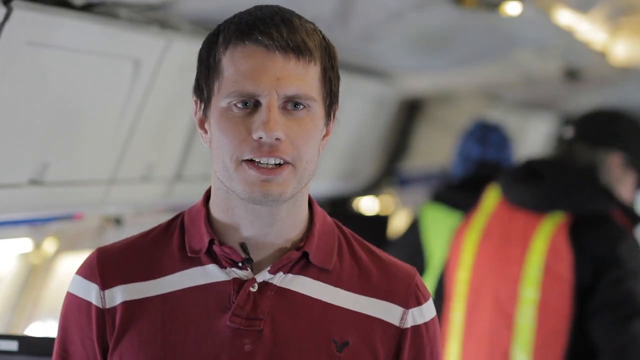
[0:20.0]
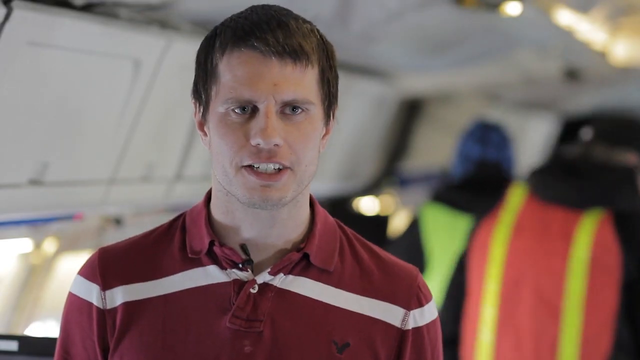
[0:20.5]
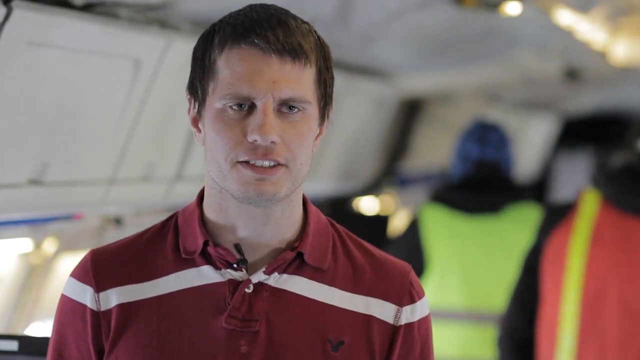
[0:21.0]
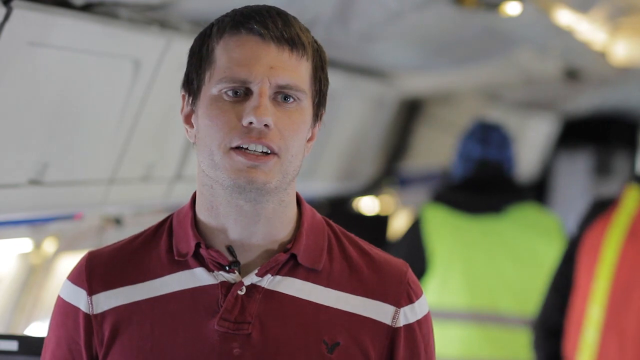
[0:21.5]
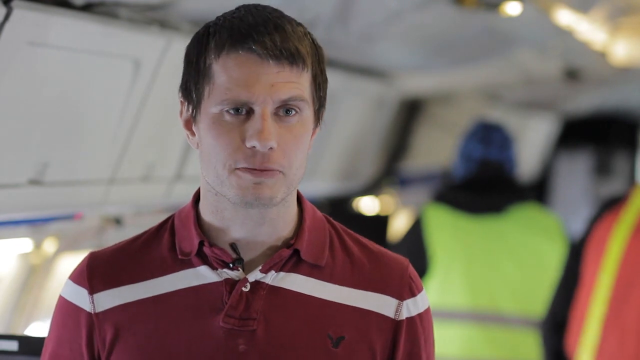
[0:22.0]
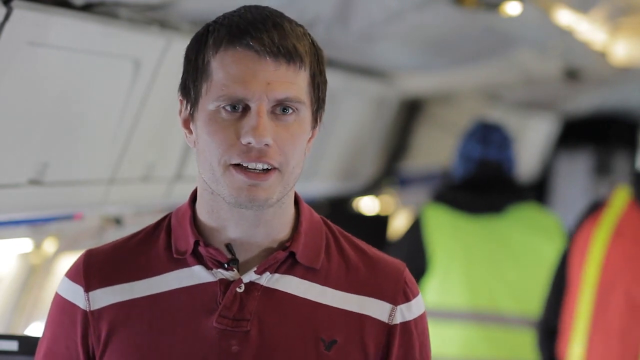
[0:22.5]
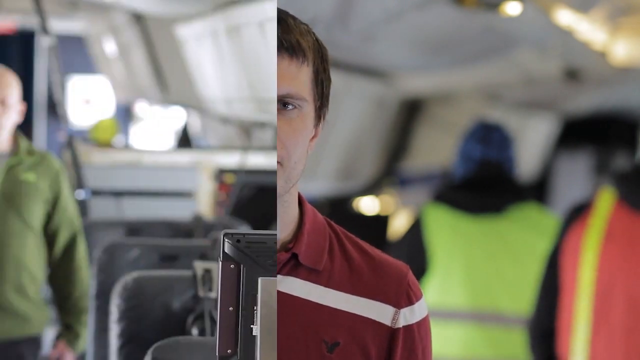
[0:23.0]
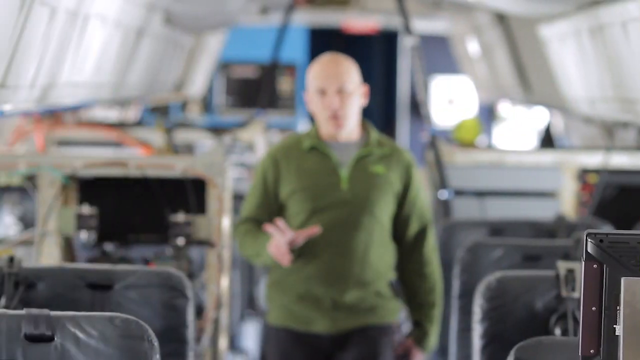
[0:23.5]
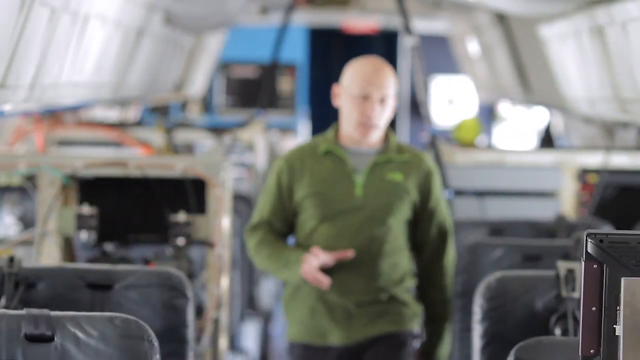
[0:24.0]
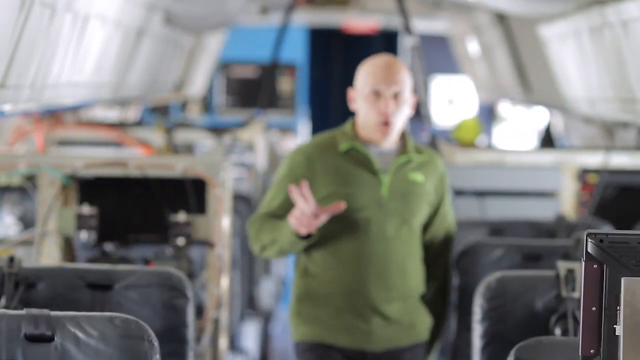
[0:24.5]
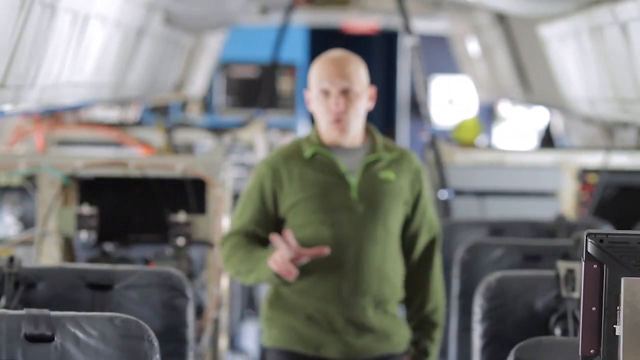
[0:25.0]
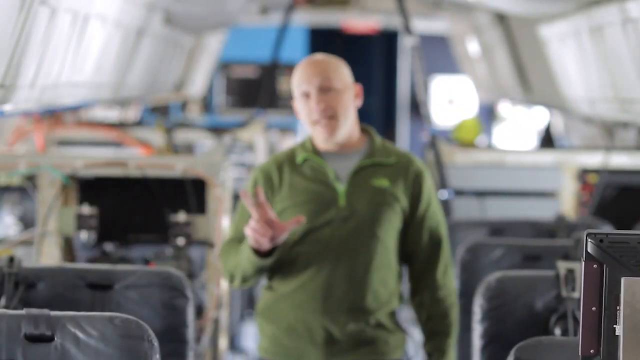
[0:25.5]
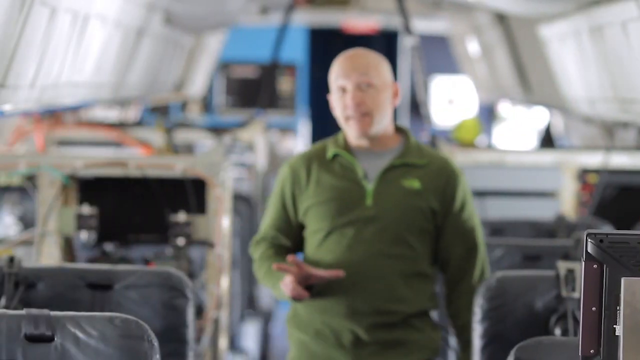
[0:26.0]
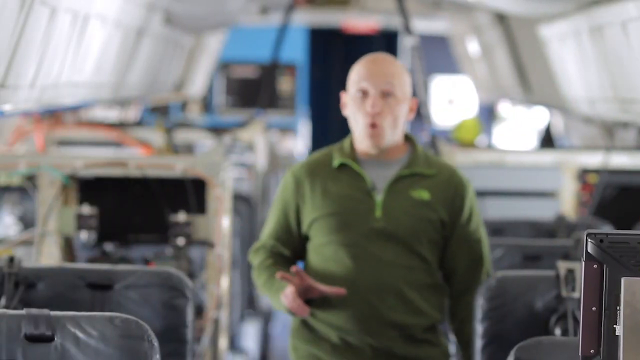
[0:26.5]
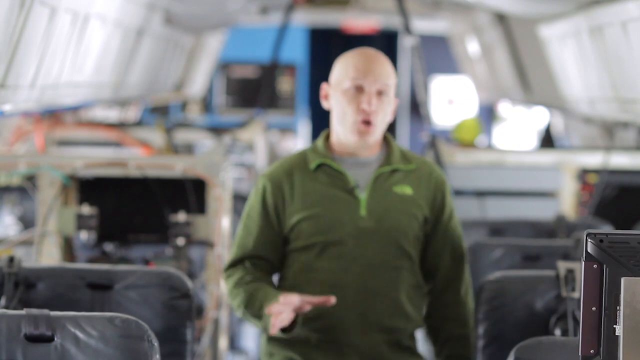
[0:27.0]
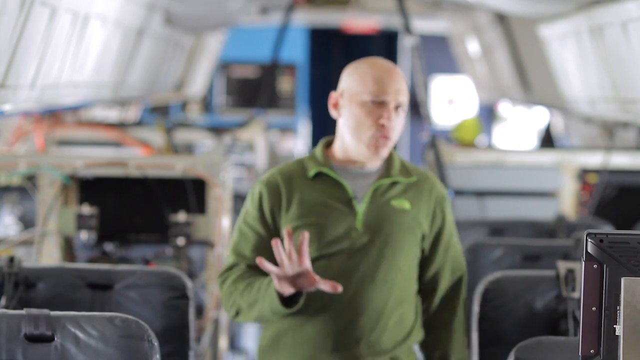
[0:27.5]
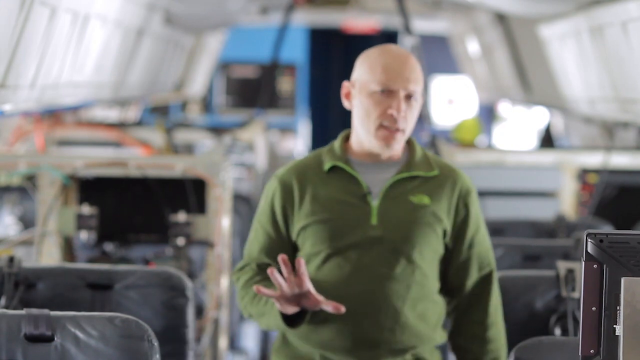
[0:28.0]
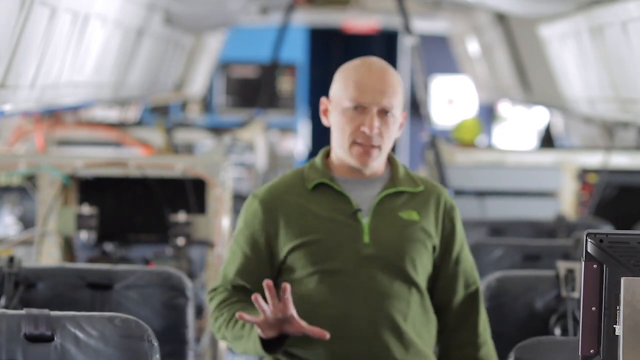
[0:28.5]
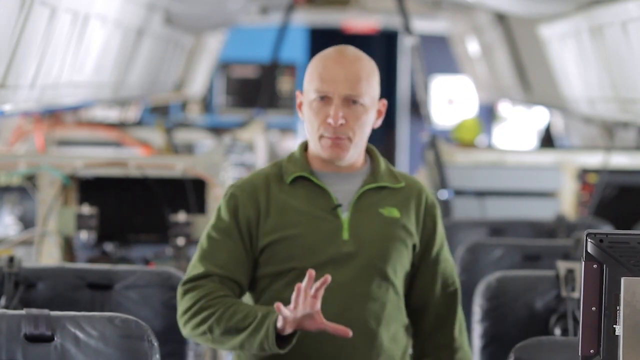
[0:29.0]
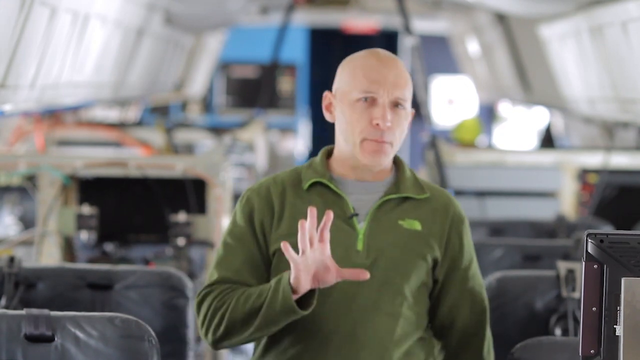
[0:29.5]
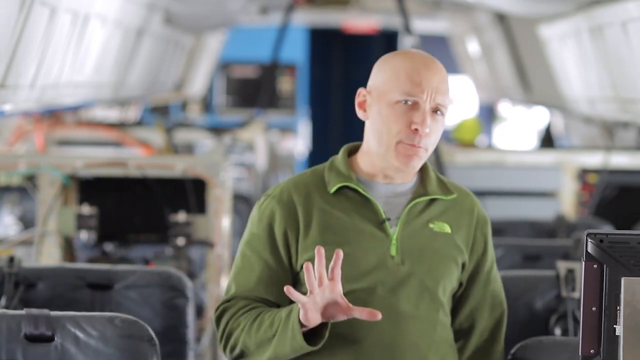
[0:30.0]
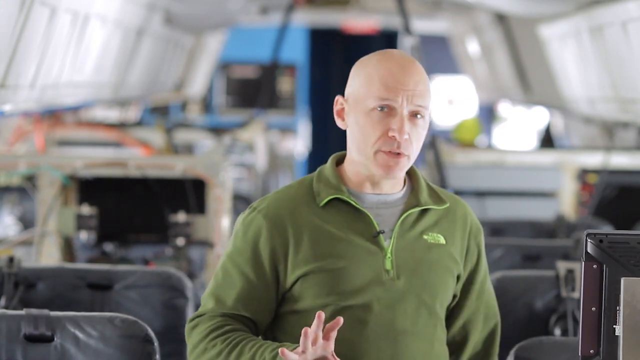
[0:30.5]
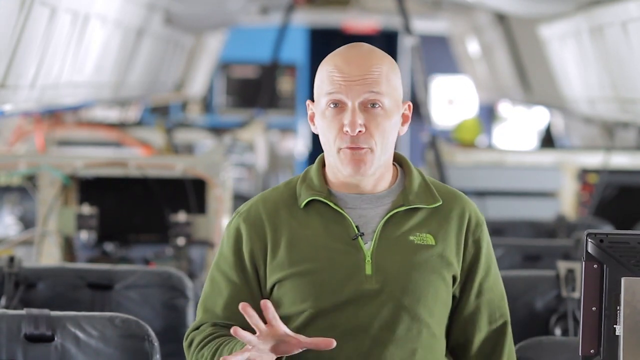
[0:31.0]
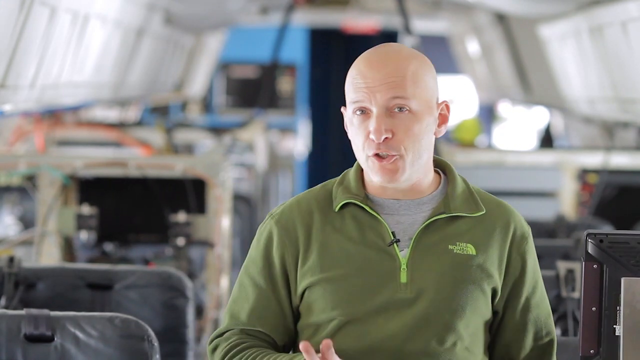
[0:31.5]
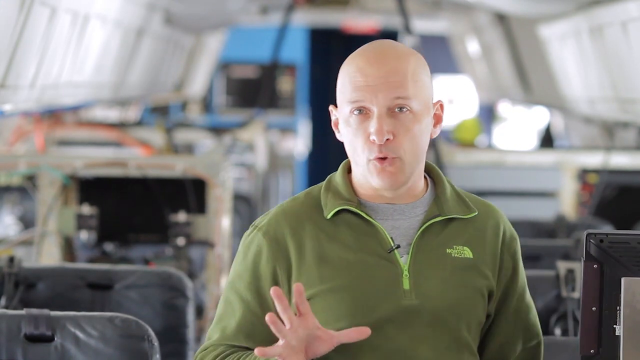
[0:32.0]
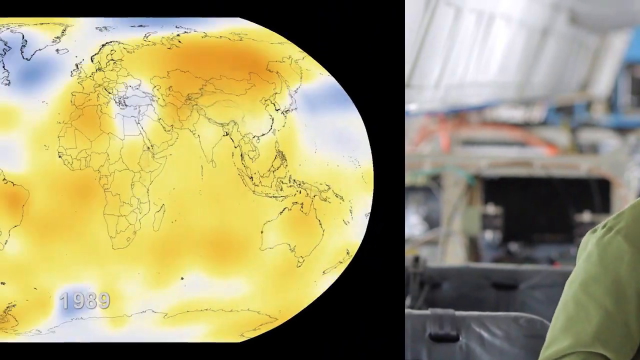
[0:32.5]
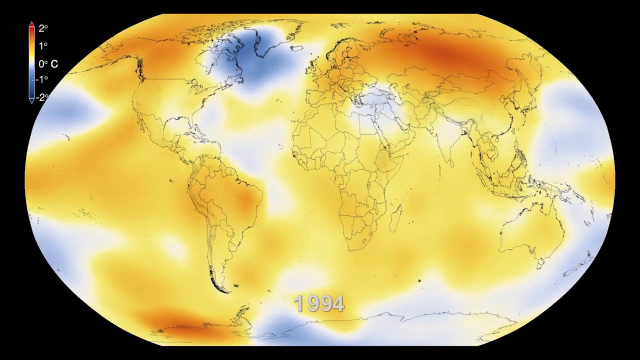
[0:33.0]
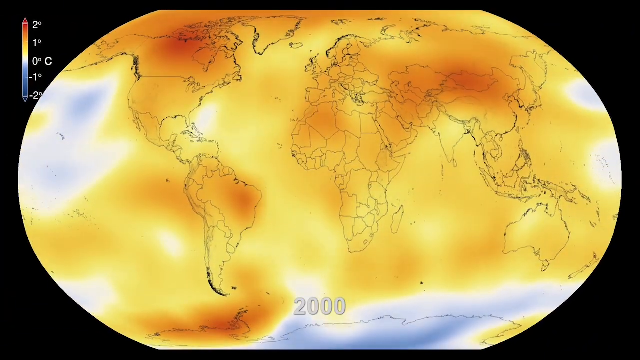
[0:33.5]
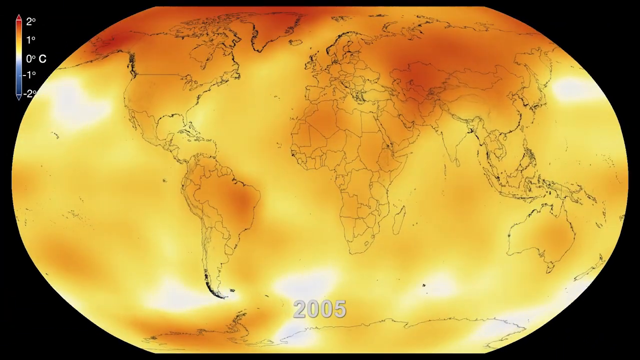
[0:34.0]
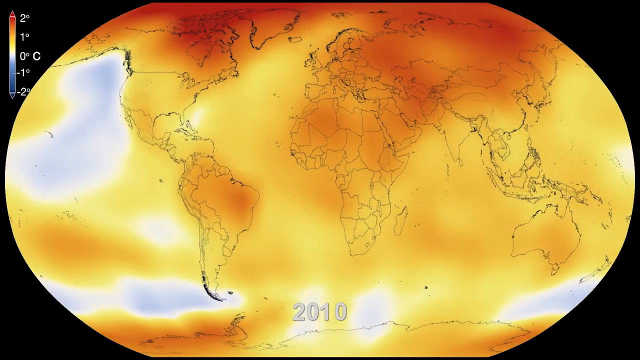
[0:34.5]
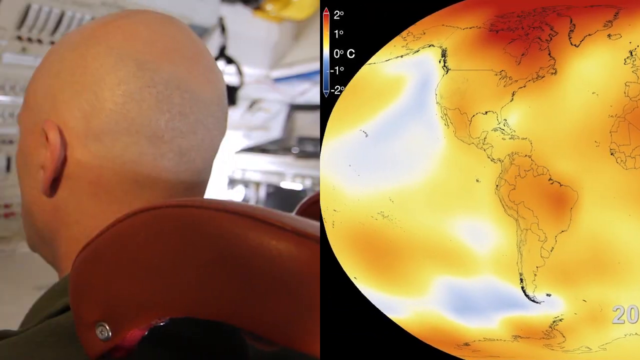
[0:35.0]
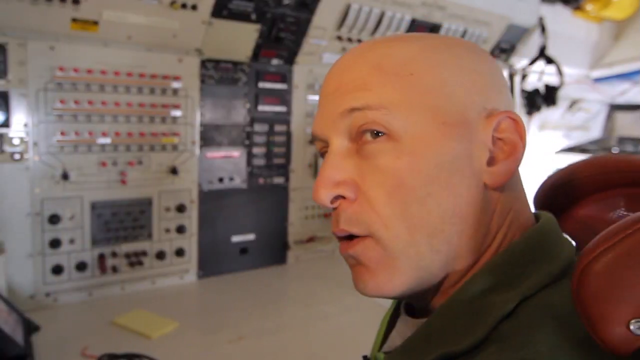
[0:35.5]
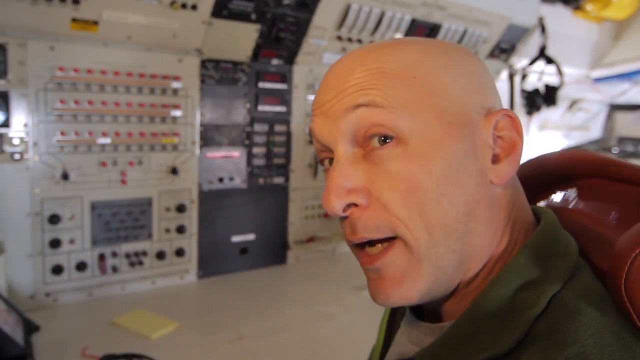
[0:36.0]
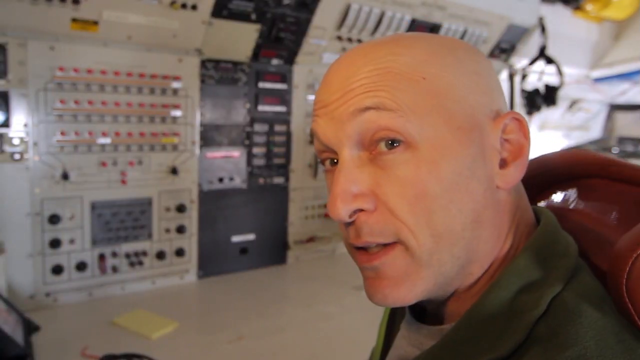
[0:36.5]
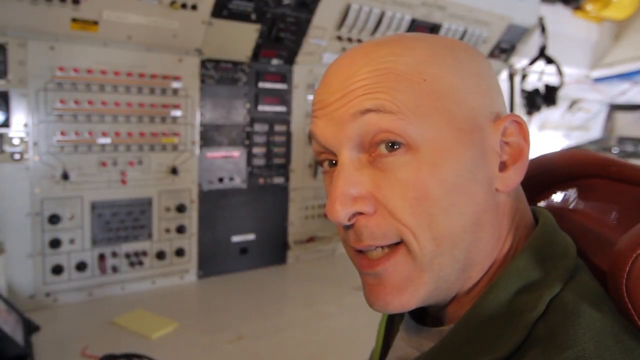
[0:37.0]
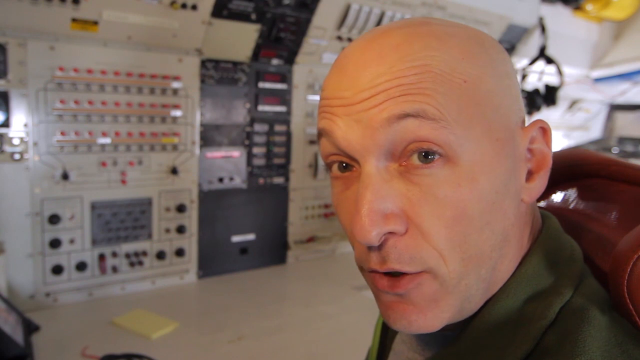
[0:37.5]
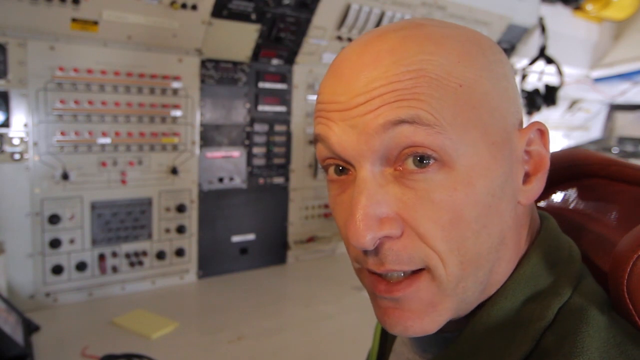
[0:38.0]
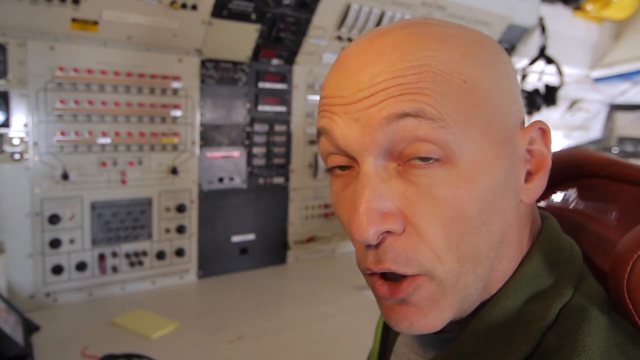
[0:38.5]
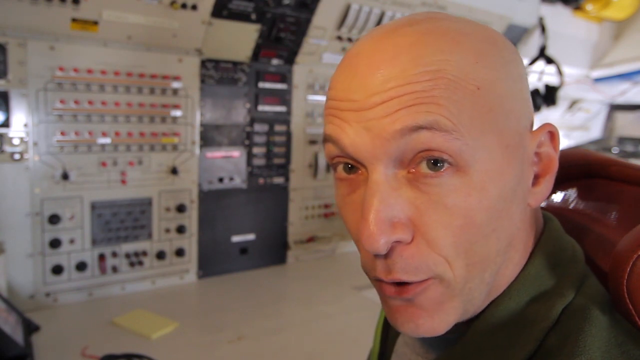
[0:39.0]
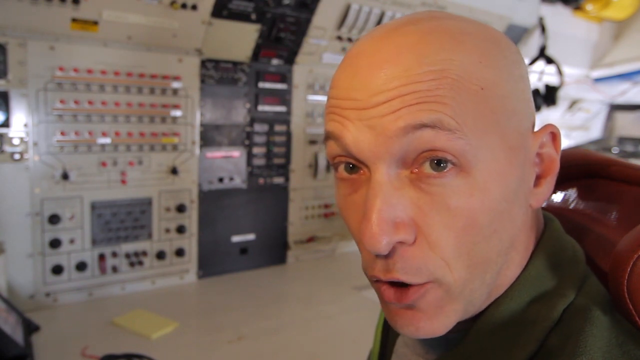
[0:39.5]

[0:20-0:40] A Caucasian man wears a red and white shirt, with other people behind him wearing vests like construction workers' vests. They all appear to be inside some type of aircraft, like a plane. Another man appears on screen, also in an aircraft: a bald Caucasian man in a green North Face jacket who talks with his hands a lot. No words appear on the screen. A picture of the Earth follows, apparently showing temperatures from 1999 onward getting hotter over the years. The bald man then returns to the screen, talking.